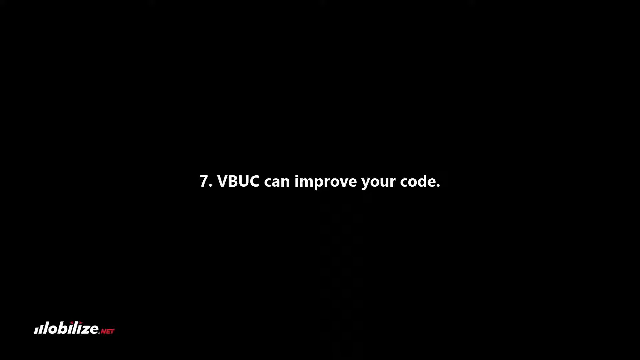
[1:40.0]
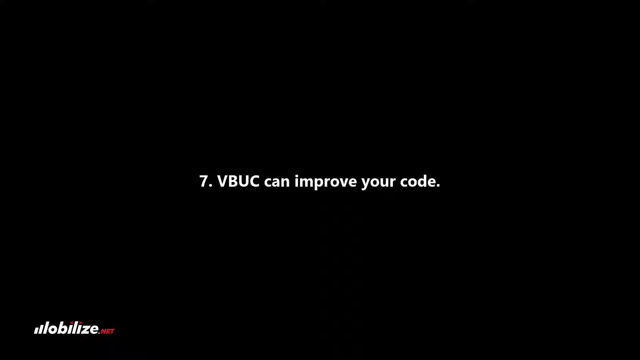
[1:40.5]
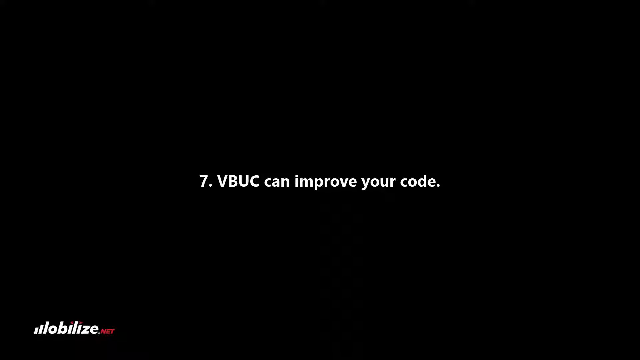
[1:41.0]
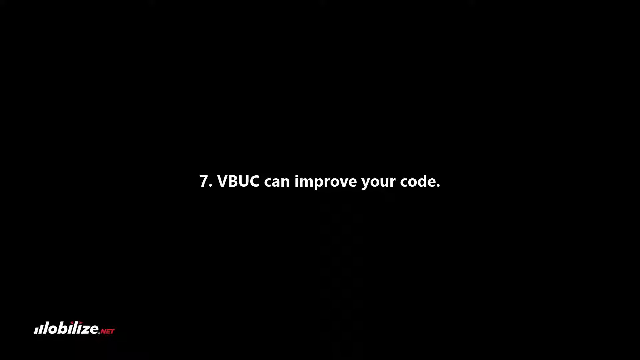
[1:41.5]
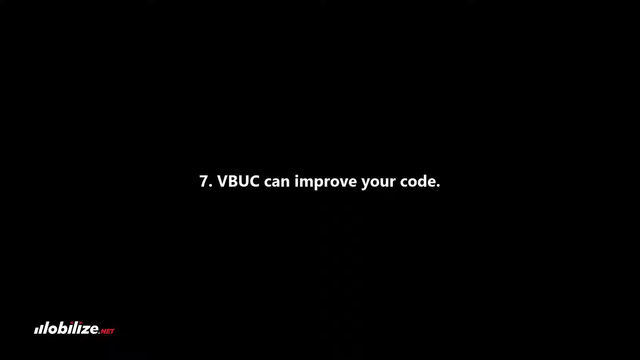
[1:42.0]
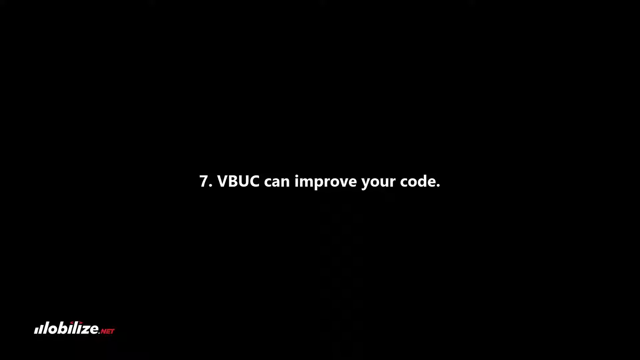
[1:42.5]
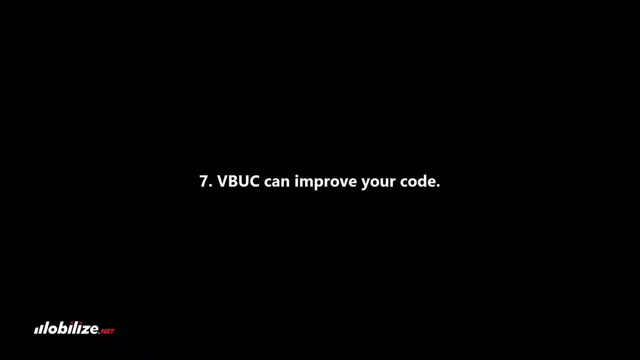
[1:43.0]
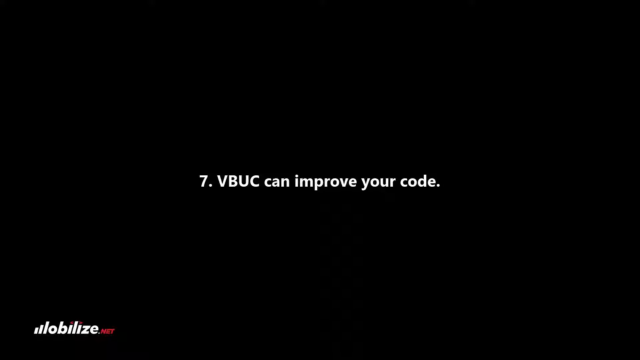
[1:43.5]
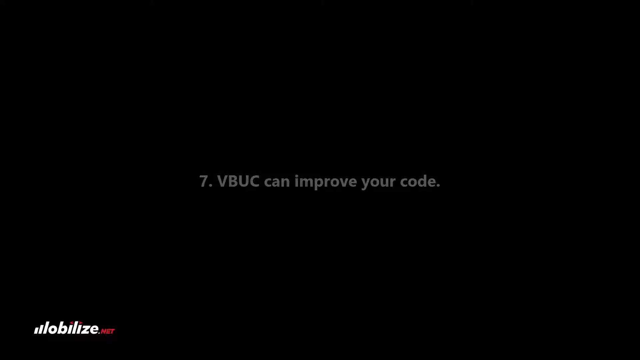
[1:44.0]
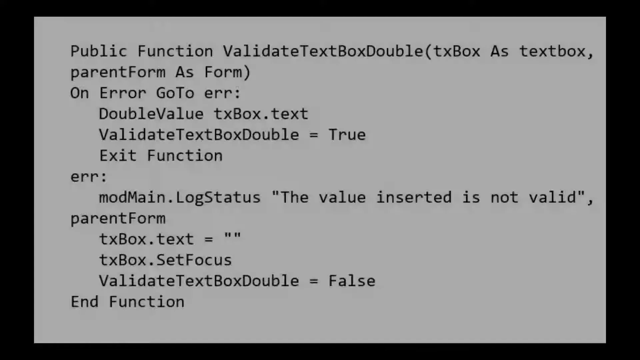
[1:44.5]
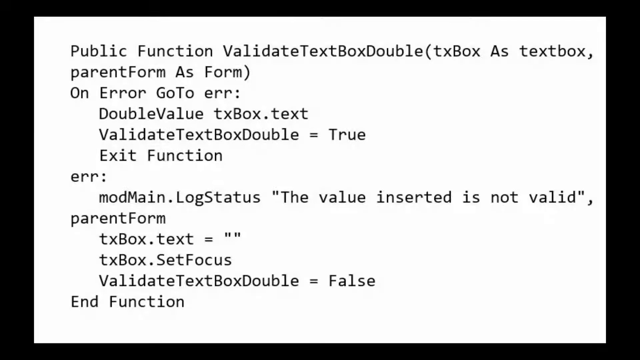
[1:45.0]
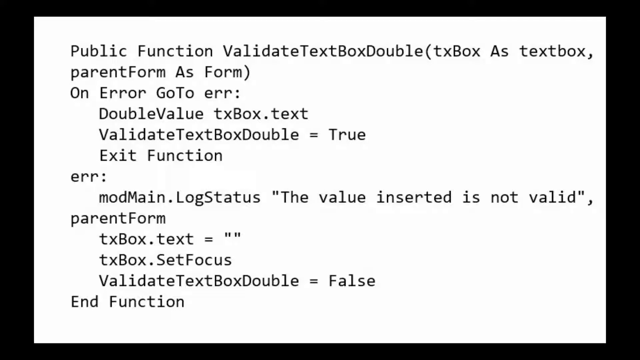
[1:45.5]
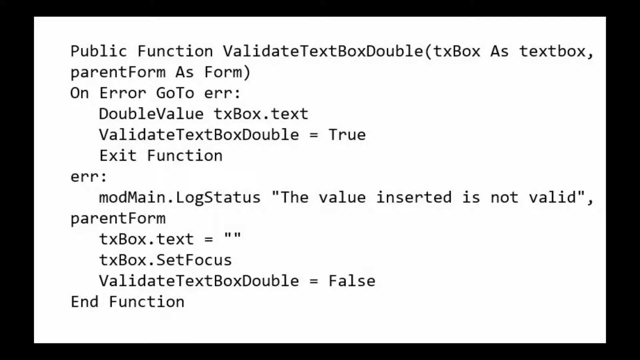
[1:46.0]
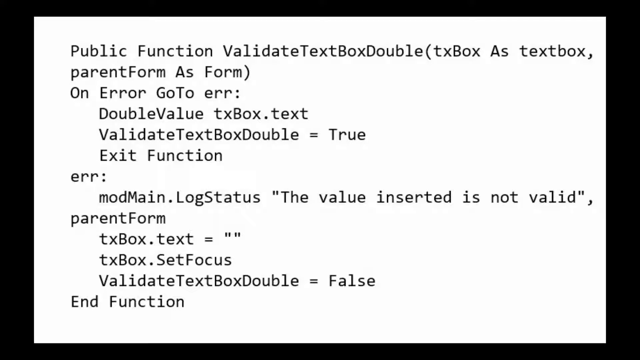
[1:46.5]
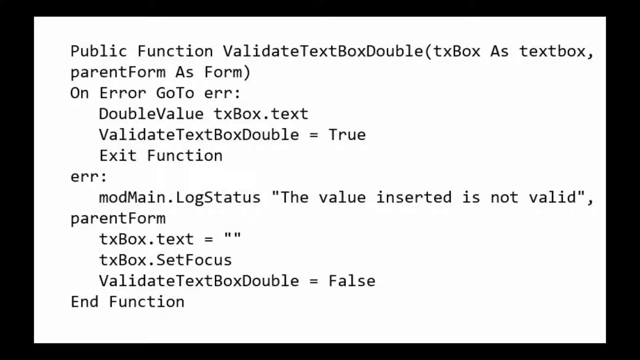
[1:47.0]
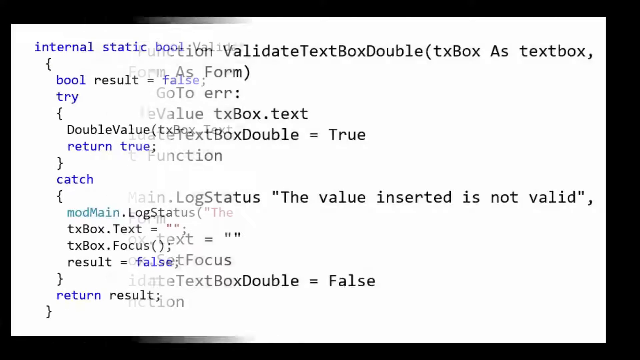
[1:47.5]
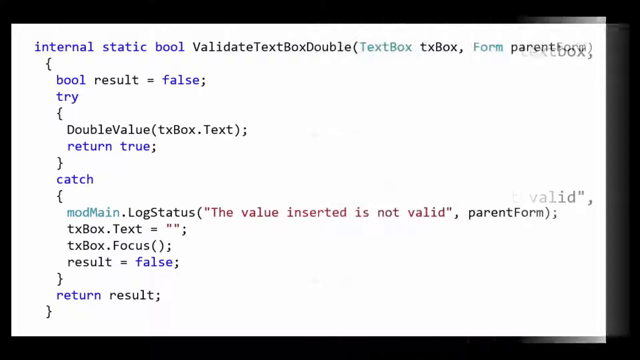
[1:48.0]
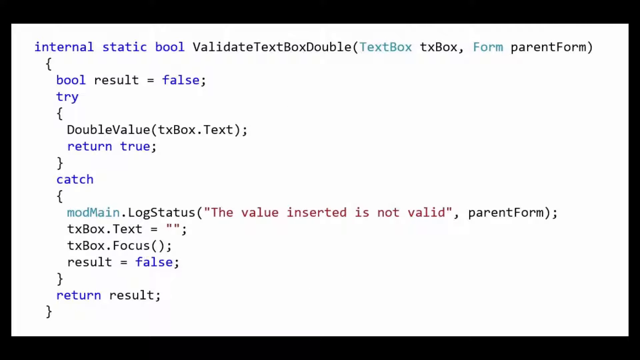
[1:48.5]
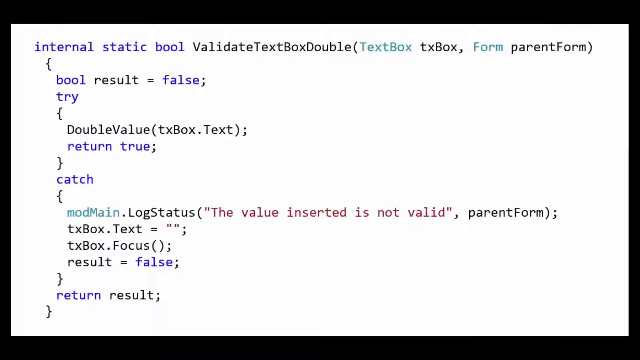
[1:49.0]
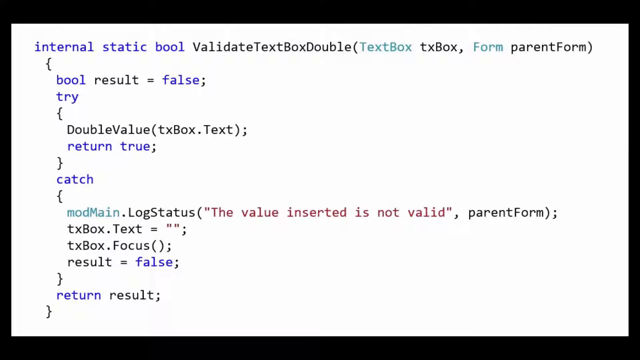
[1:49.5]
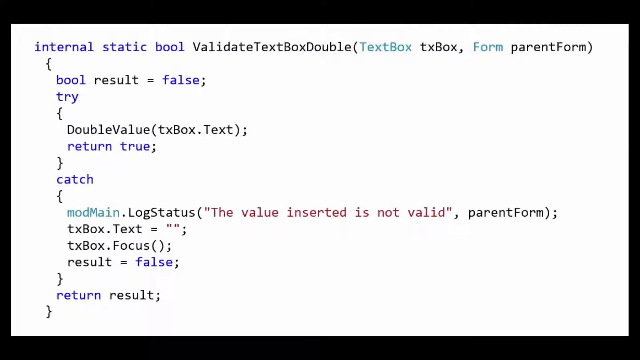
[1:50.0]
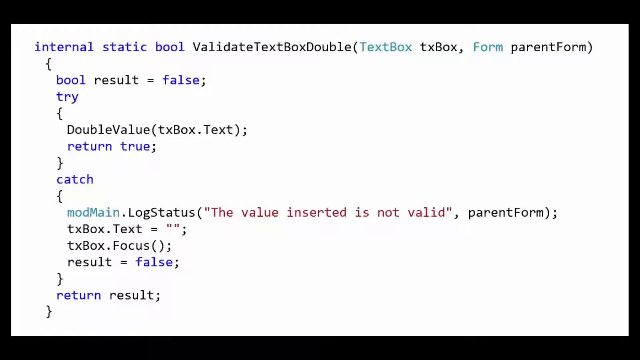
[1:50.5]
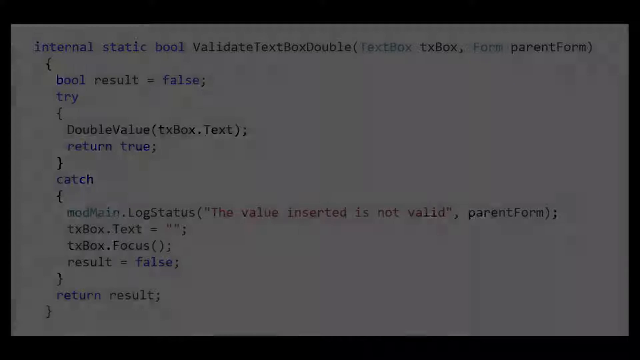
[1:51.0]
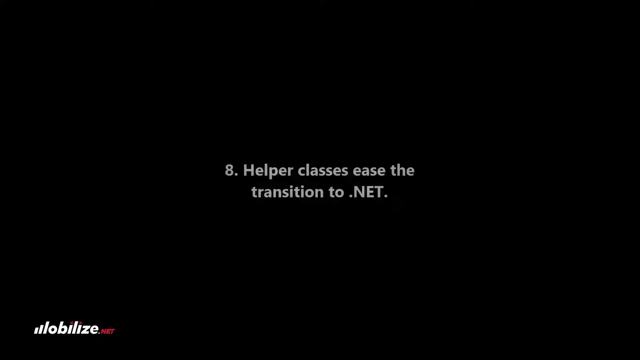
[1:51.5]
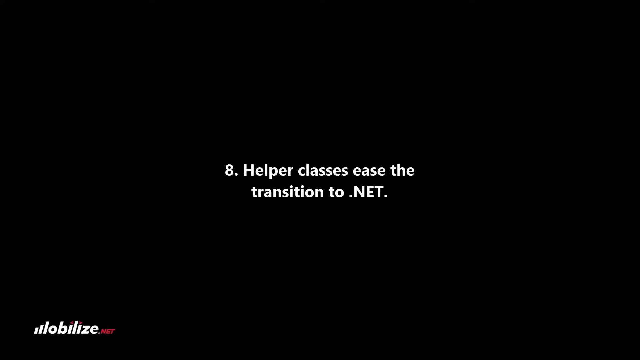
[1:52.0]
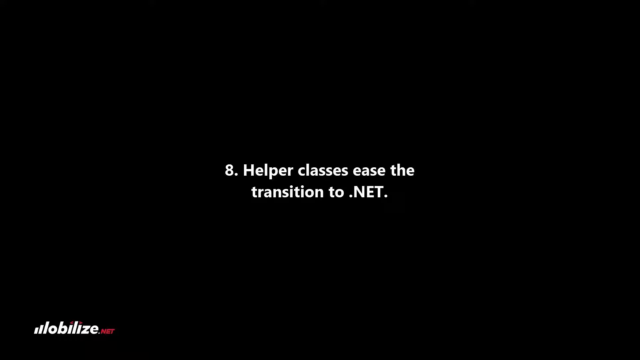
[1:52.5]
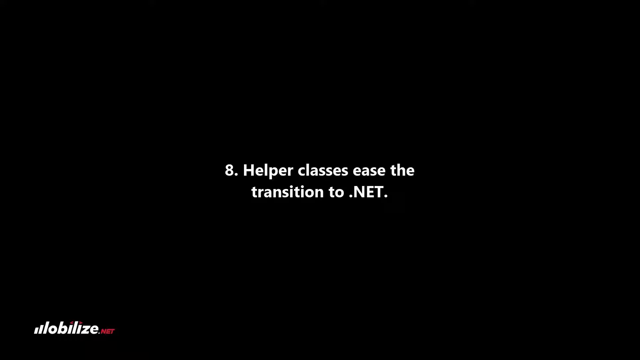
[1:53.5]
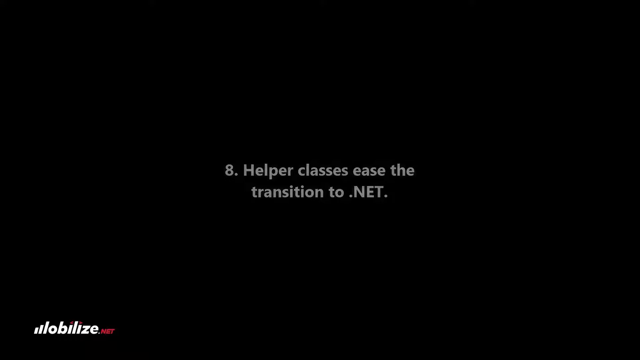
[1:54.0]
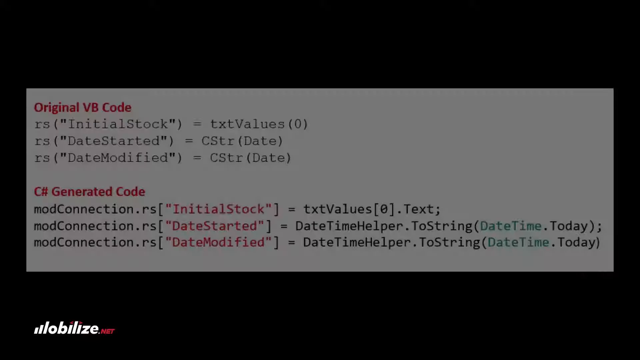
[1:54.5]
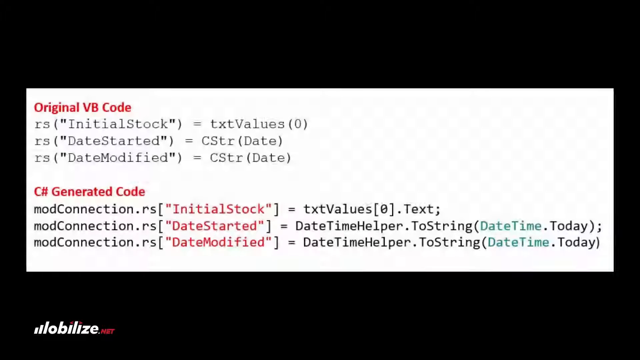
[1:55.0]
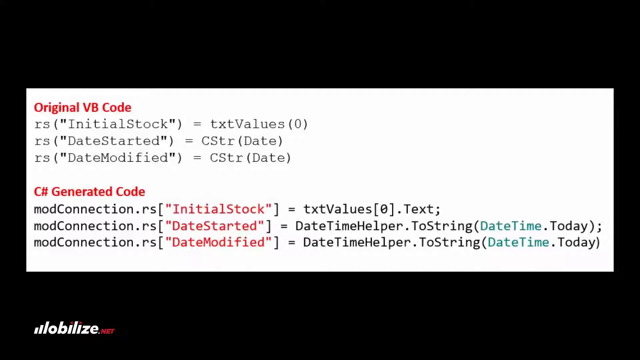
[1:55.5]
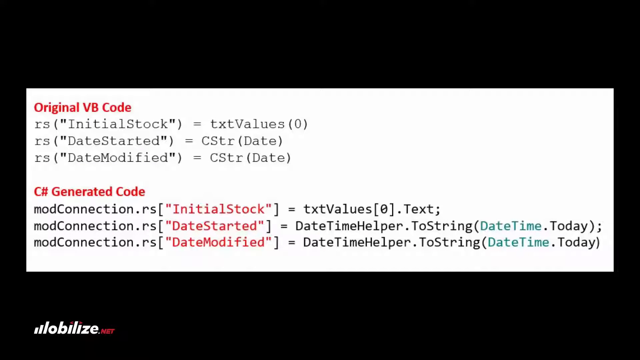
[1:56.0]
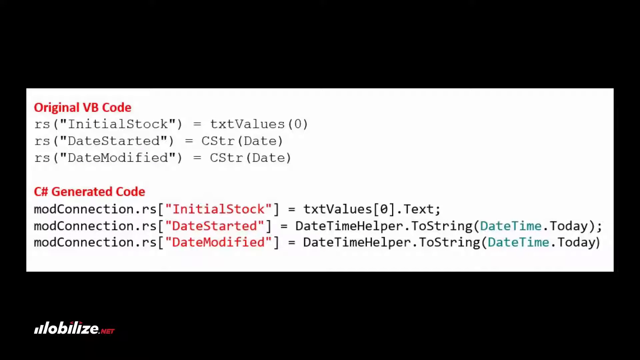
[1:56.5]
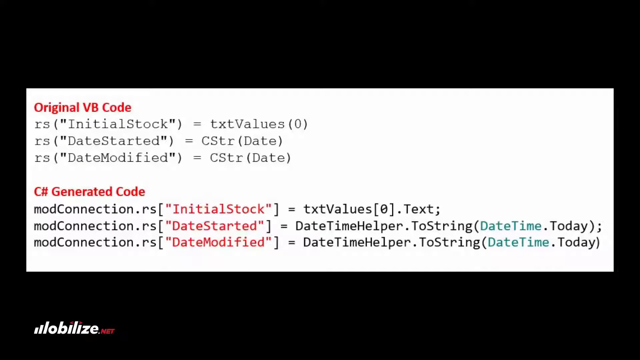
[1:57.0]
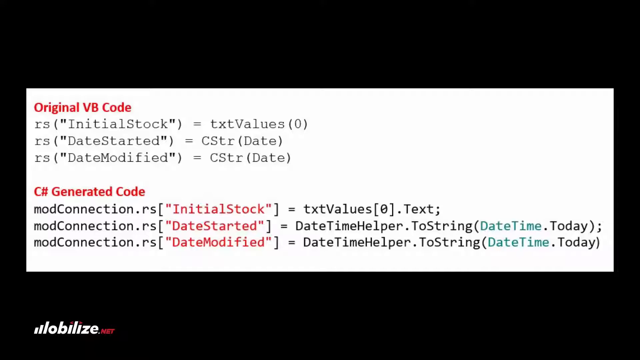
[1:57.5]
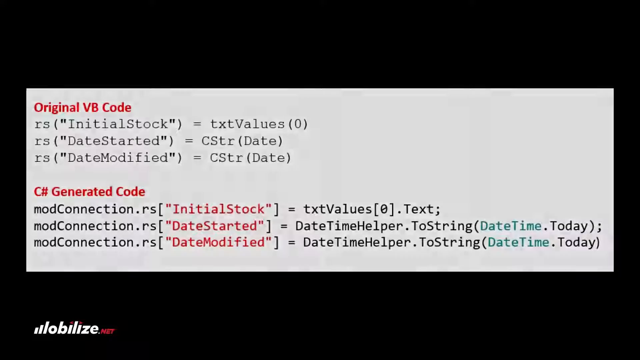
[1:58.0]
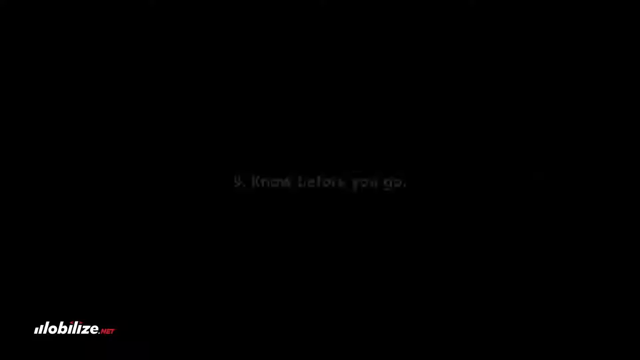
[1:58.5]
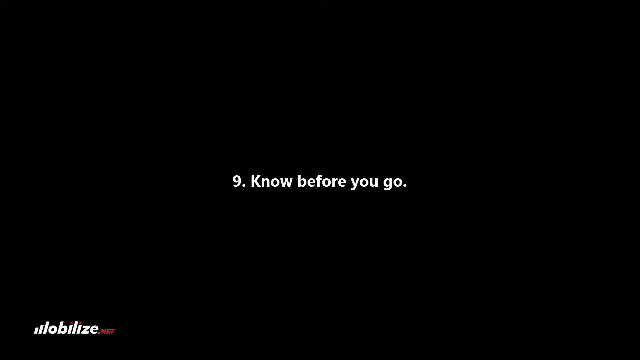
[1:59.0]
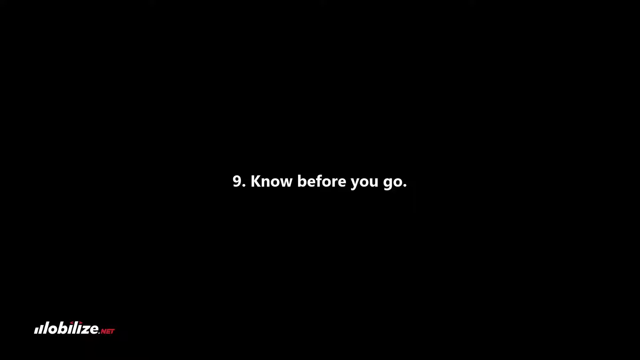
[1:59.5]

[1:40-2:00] On the black screen, number seven appears with text reading "VBUC can improve your code," in white Arial font in the center of the screen. It holds for a few moments before fading out, and another image of code fades in. Its title reads "public function validate text box double" followed by parentheses containing "TX box as text box, parent form as form," with the code below. The image holds for a few moments, then swipes to a new image of code that appears to be the C# generated code. This image holds for a few moments before fading out to the black screen, where white Arial text in the center reads "8. Helper classes ease the transition to .net." The text holds for a few seconds before fading out to black, and another image of code fades in, showing two types of code: the original VB code followed by the C# generated code. It stays for a few seconds before fading back to the black screen, where white Arial text in the center reads "number nine, know before you go."